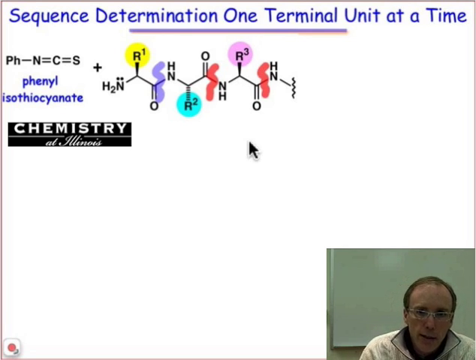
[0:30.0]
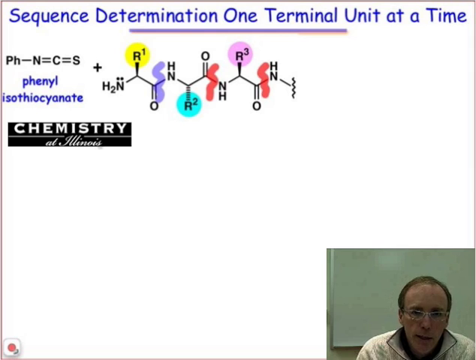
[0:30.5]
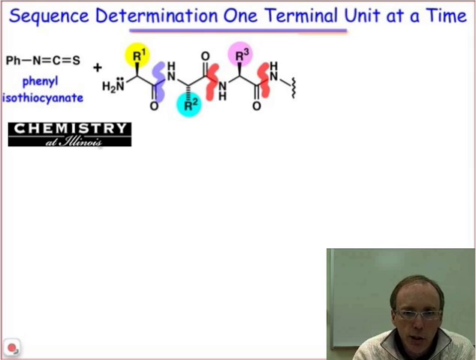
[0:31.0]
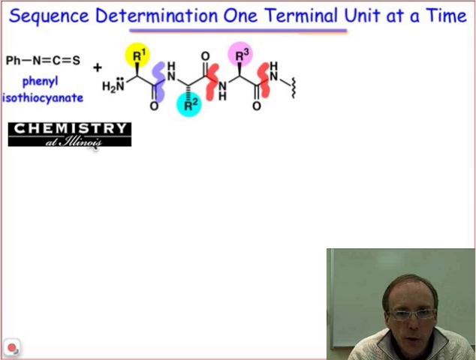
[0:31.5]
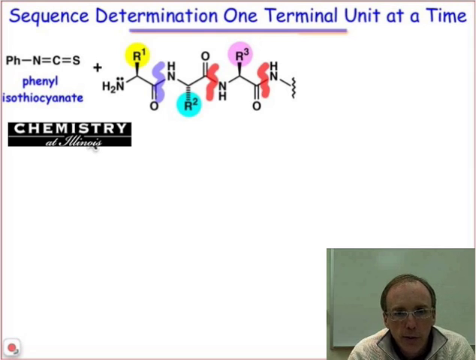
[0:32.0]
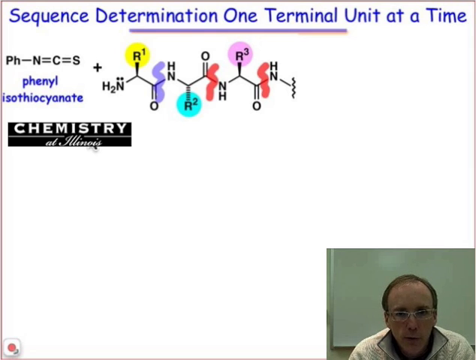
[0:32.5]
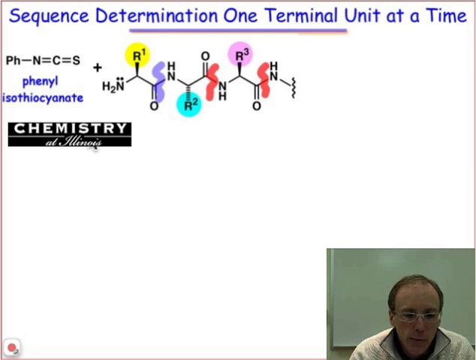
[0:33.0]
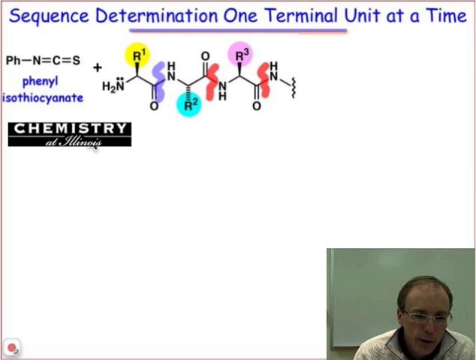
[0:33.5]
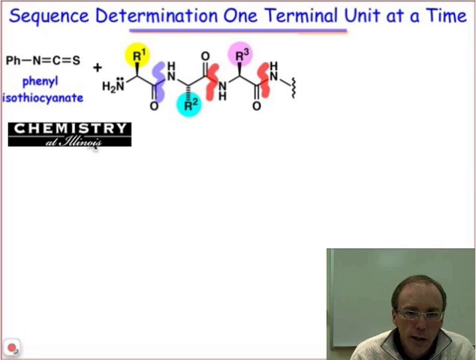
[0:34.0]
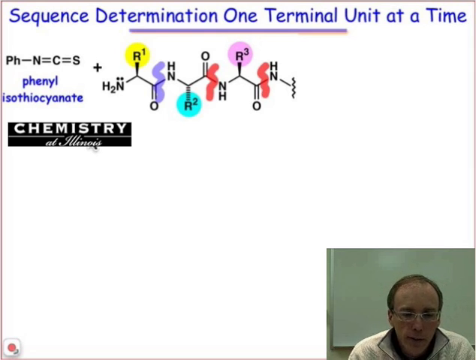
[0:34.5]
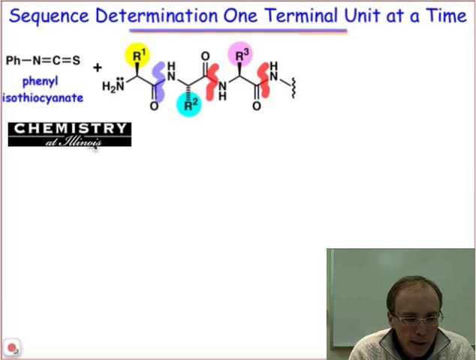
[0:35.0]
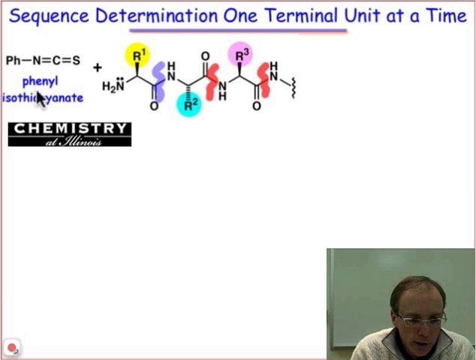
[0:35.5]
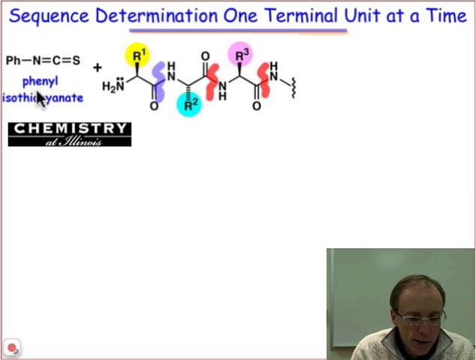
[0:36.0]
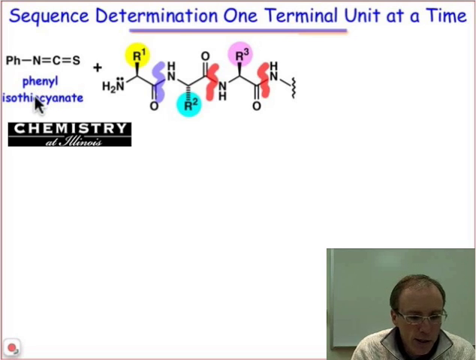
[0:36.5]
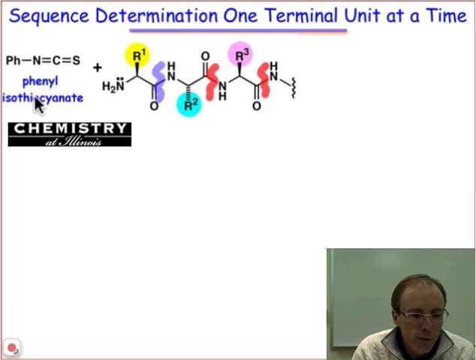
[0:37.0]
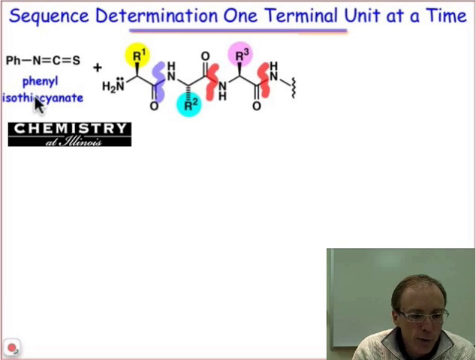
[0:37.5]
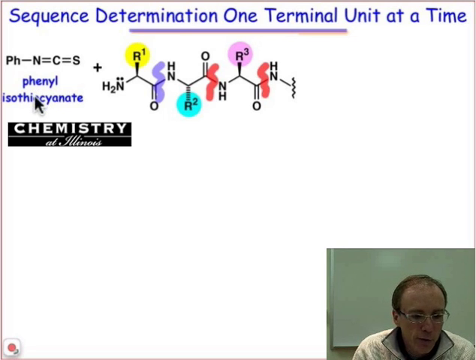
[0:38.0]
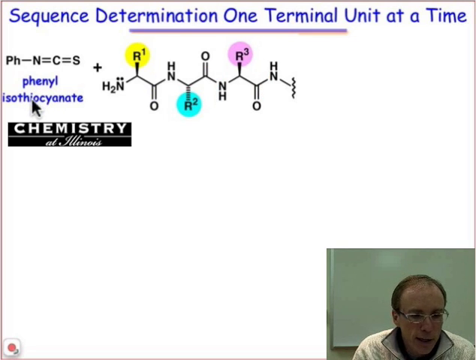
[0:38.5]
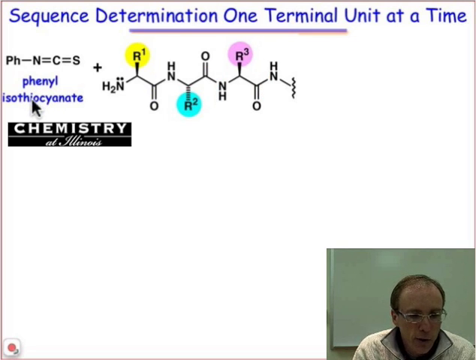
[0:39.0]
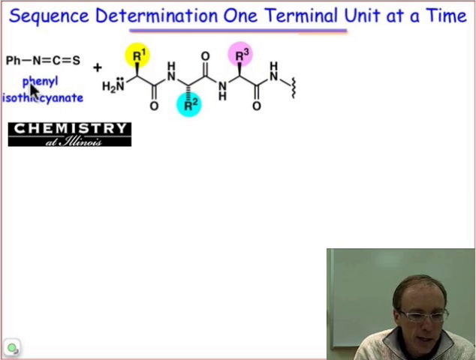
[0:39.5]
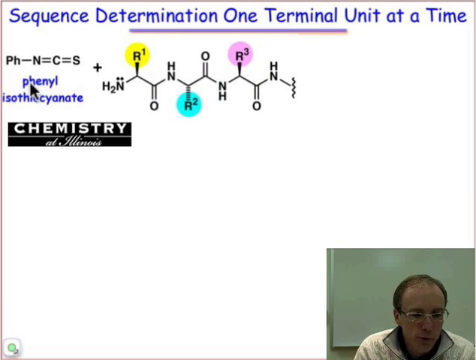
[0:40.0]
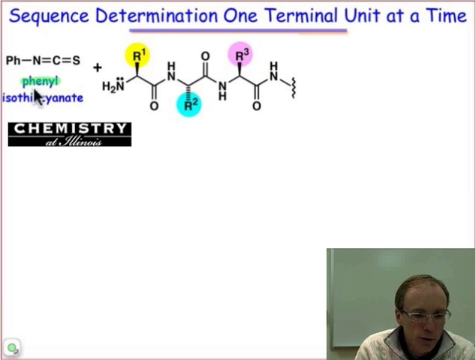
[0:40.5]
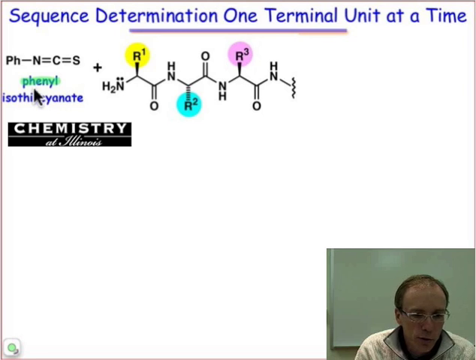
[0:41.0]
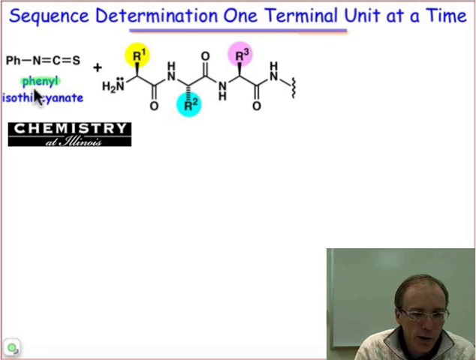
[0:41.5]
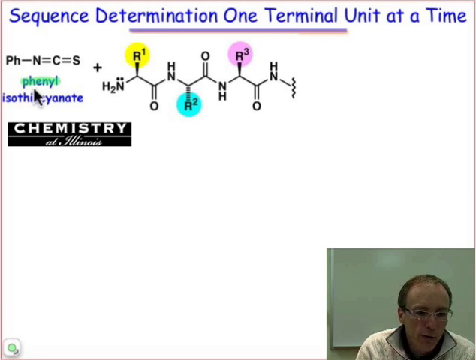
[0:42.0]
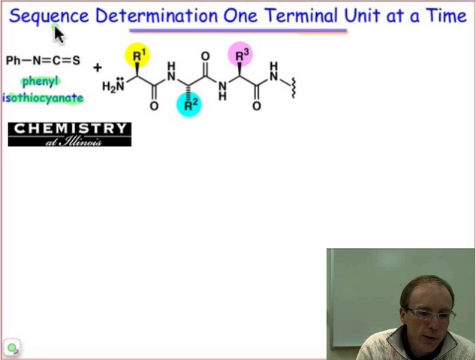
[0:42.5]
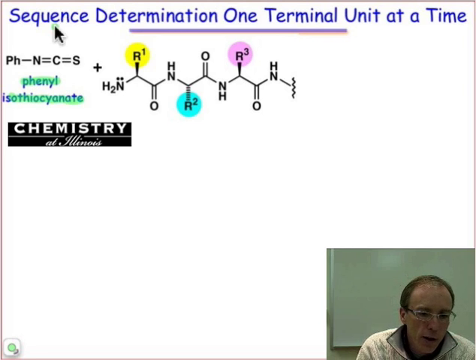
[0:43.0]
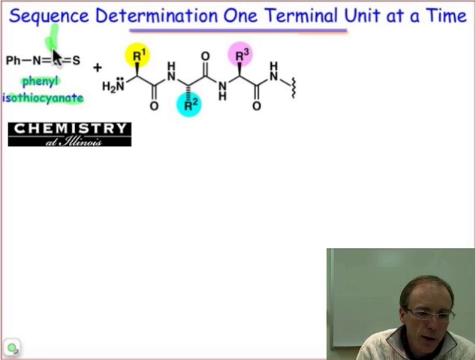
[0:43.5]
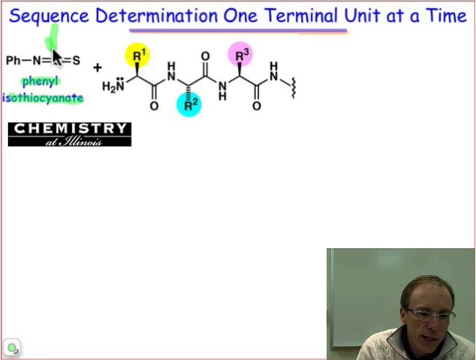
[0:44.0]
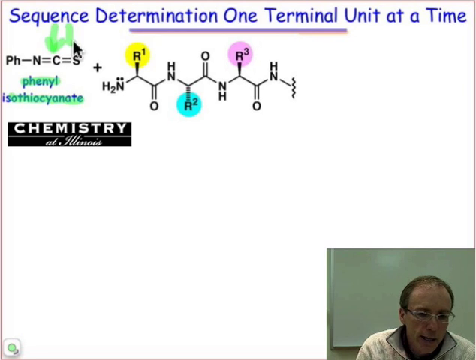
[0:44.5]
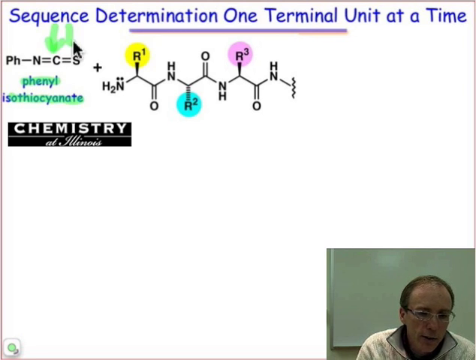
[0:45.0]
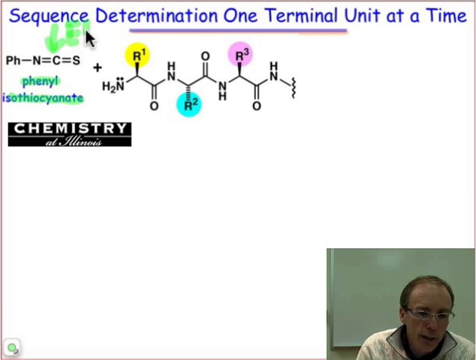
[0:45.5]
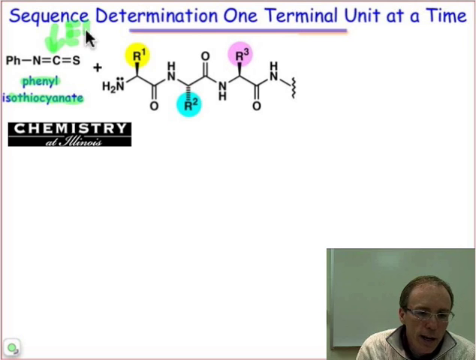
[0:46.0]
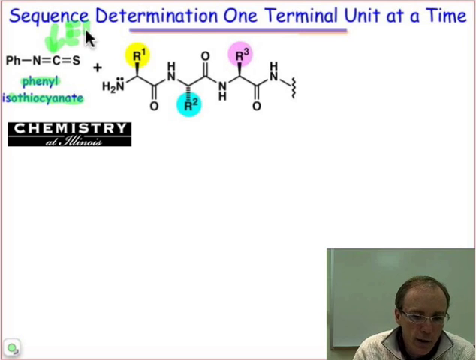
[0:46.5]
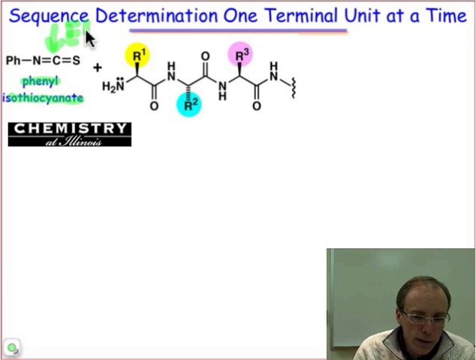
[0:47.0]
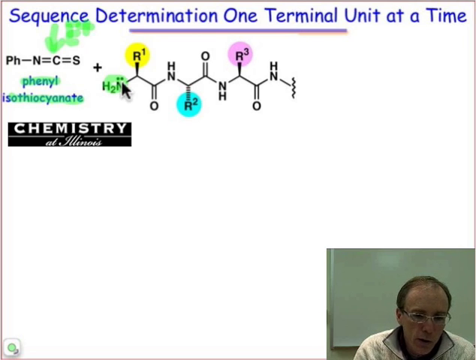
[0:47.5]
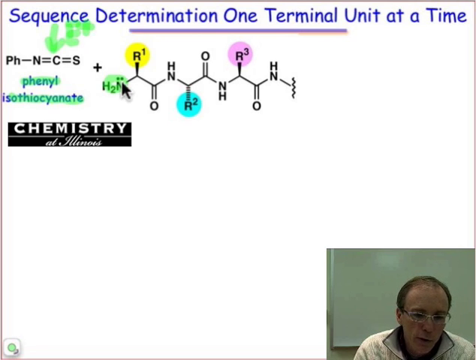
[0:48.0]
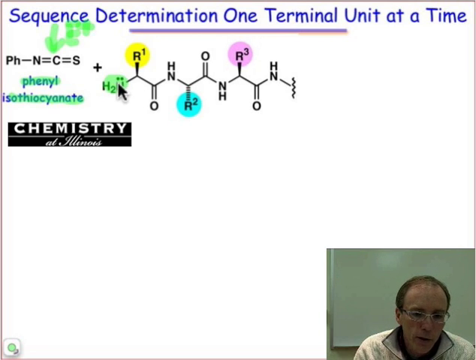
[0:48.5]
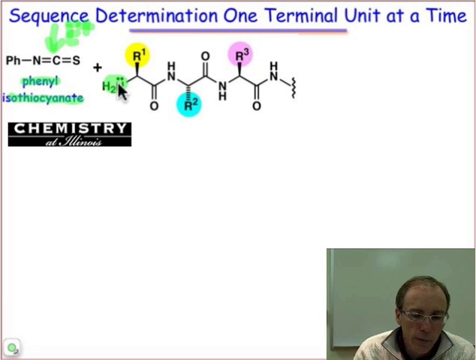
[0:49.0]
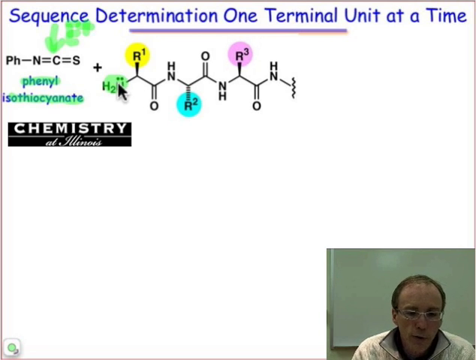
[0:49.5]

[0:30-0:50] A professor shares his computer screen, which has a white background with cobalt blue text at the top stating "sequence determination one terminal unit at a time." Beneath it, in the center of the top of the image, a purple line runs from left to right. Directly beneath that on the left is a formula that states "pH-n=C=S," followed by a plus sign. It then goes into the chain of the formula for the phenyl isothiocyanate, beginning with H2N, going up to R1 with a yellow circle, then down to O. Just past the O is a purple squiggle that the professor has put there. The chain moves up to HN, then down to R2 inside a blue circle, then up to an O, followed by a red squiggle the professor added, followed by an NH. It goes up to an R3 inside a pink circle, down to an O followed by another red squiggle, then up to HN, followed by a downward slant and another little black squiggle. On the bottom left is a black rectangle with white text that says "chemistry at Illinois." A black cursor floats around the screen. The professor appears on video in the bottom right corner of the screen: he is Caucasian and middle-aged with light brown thinning hair, wearing glasses and a cream-toned hoodie-type pullover.